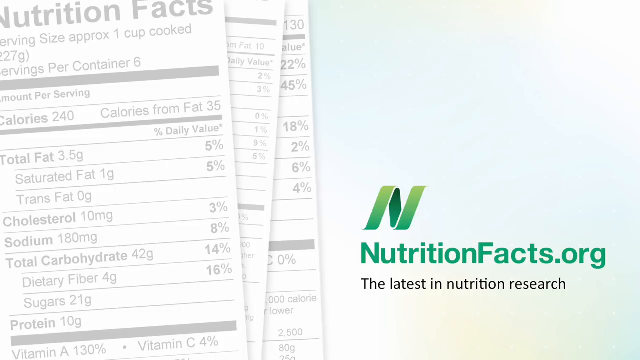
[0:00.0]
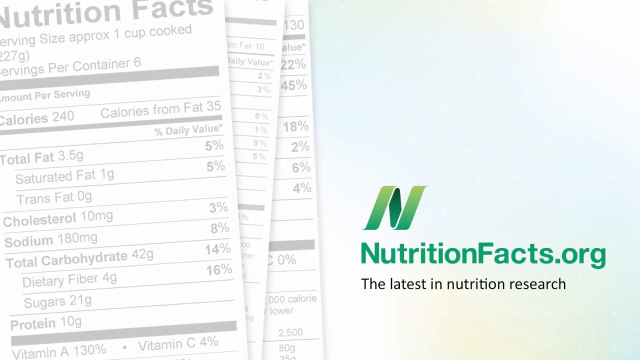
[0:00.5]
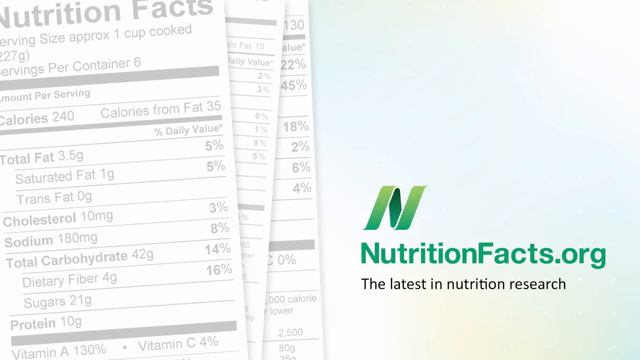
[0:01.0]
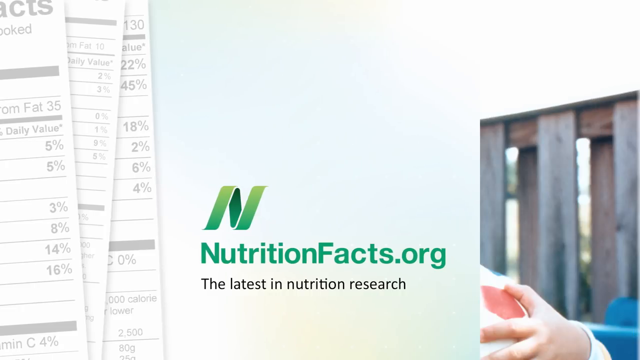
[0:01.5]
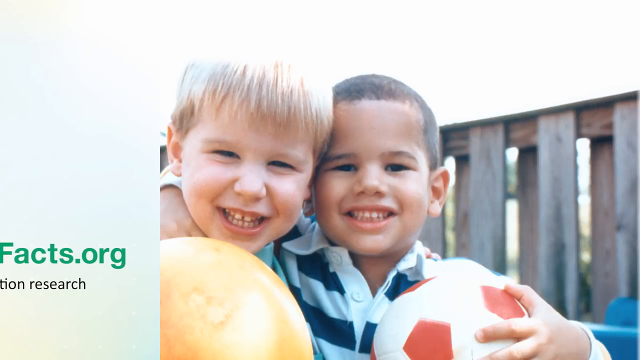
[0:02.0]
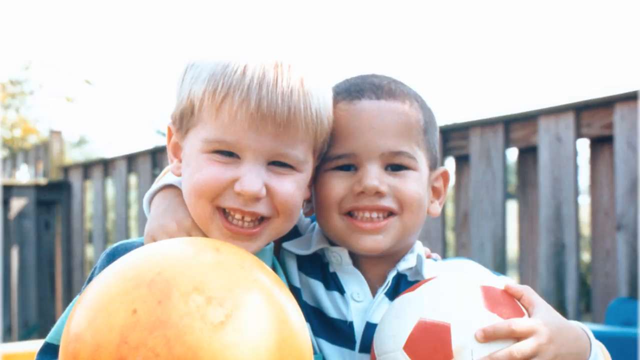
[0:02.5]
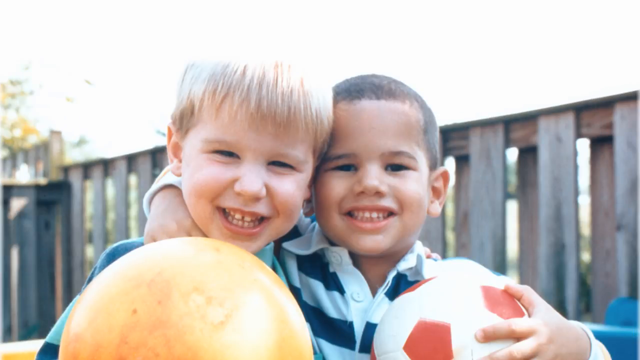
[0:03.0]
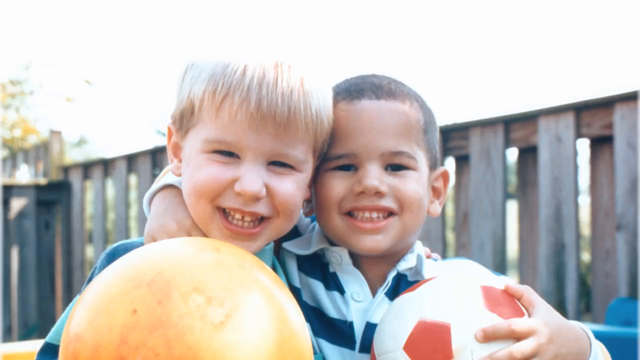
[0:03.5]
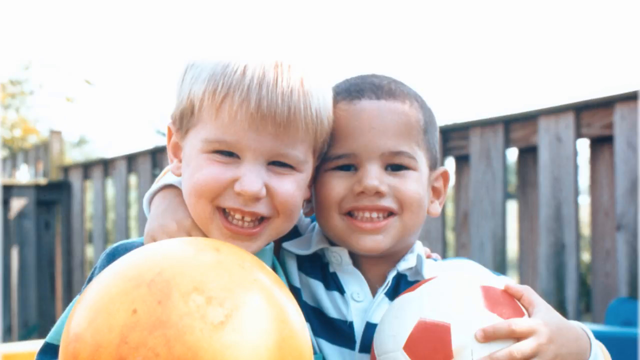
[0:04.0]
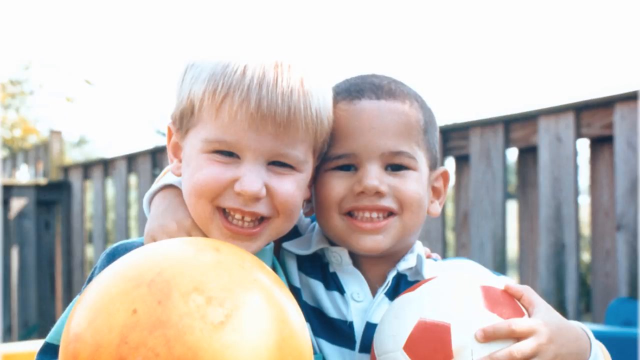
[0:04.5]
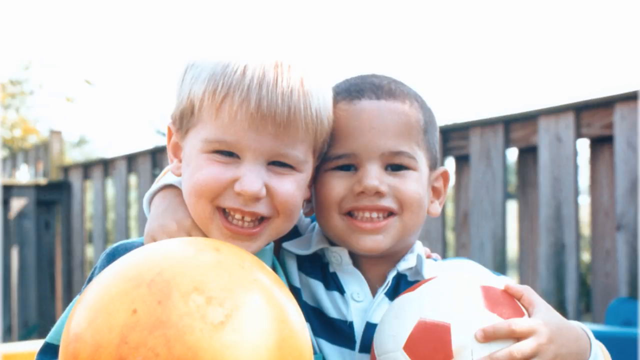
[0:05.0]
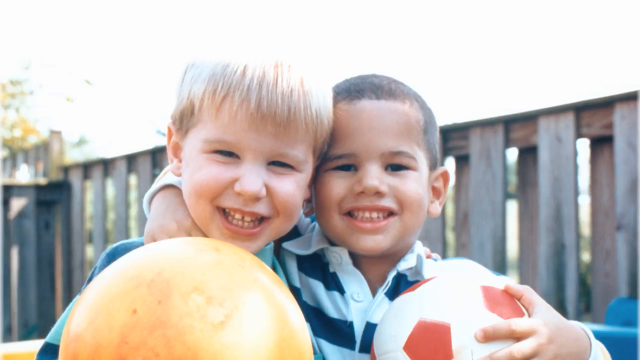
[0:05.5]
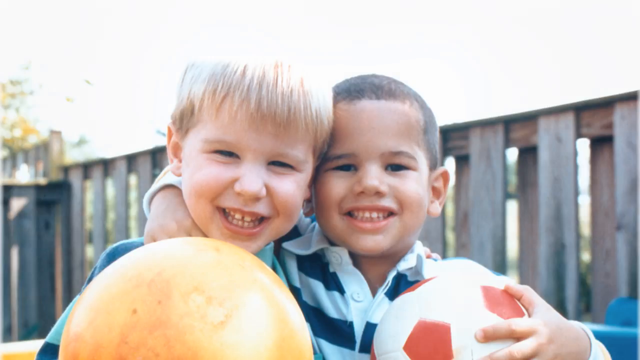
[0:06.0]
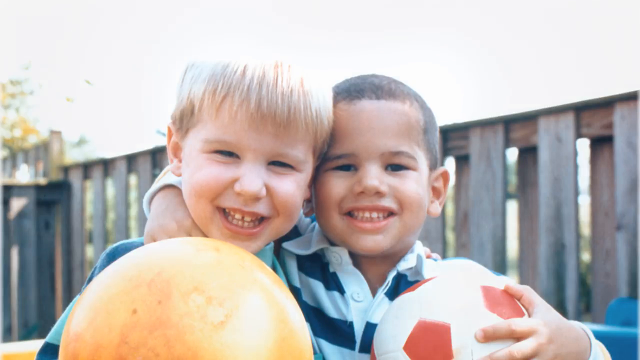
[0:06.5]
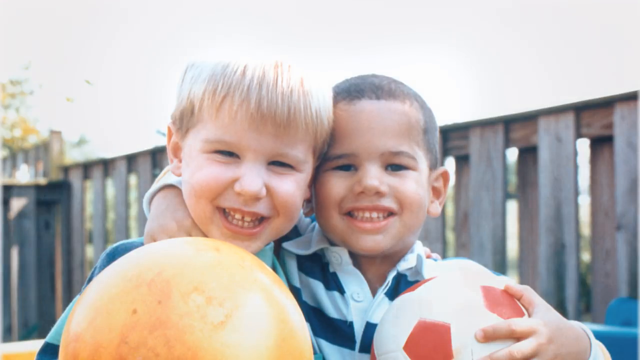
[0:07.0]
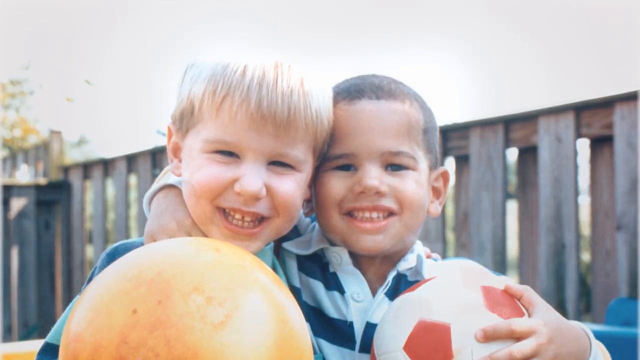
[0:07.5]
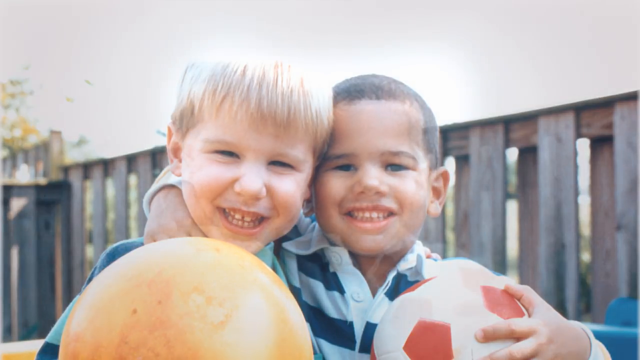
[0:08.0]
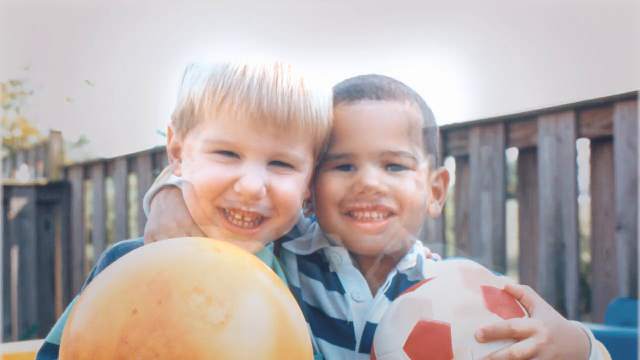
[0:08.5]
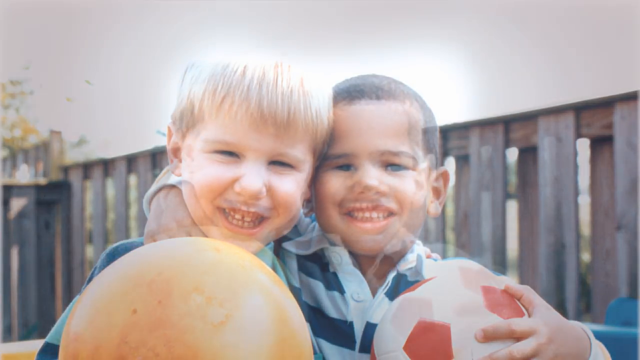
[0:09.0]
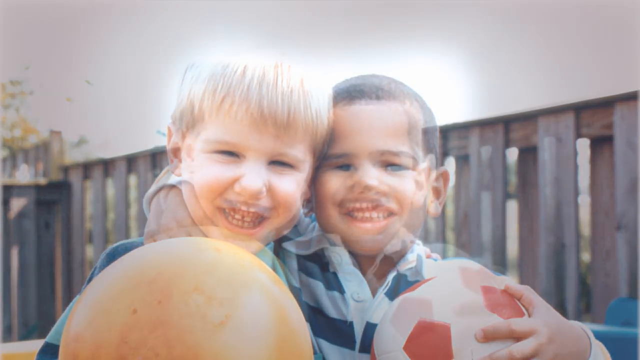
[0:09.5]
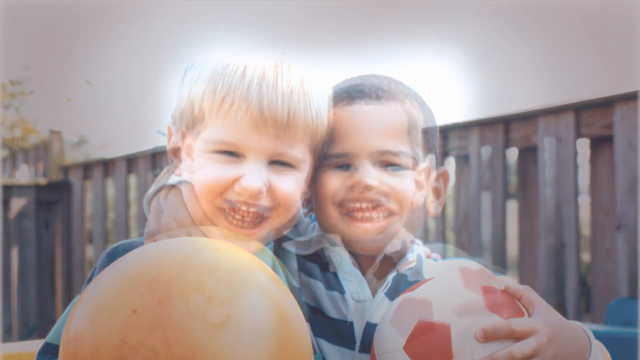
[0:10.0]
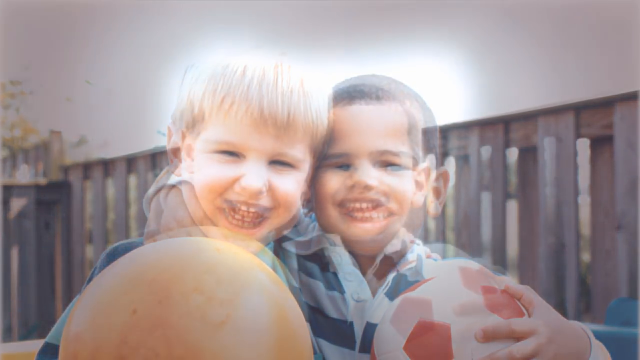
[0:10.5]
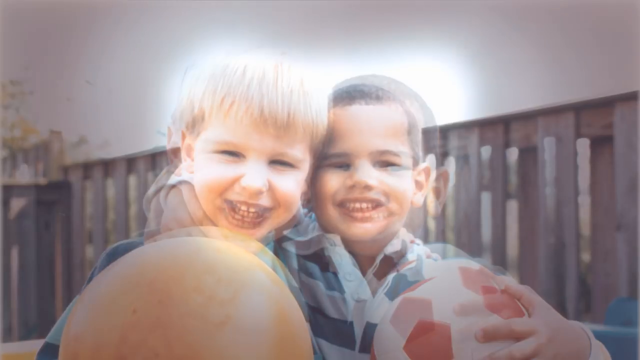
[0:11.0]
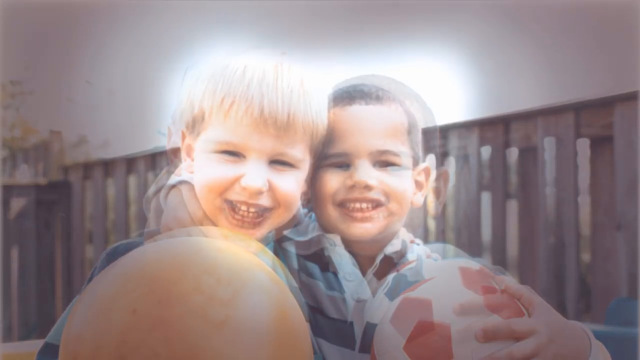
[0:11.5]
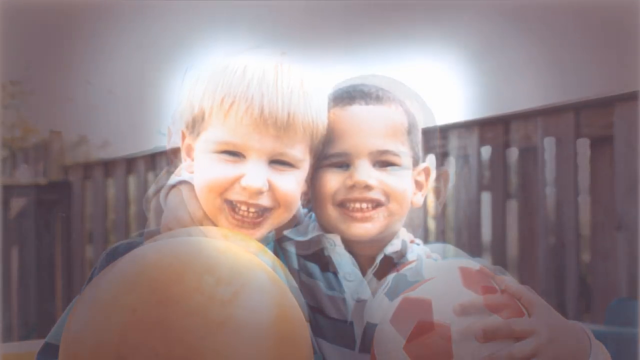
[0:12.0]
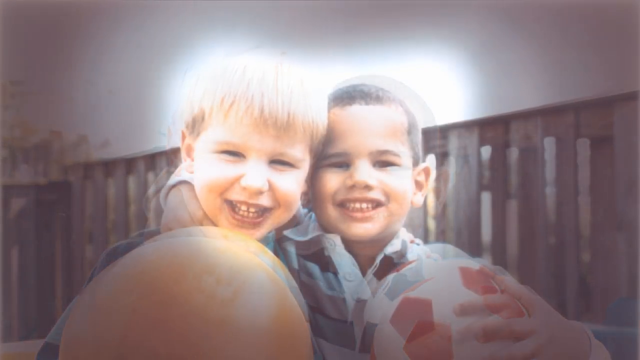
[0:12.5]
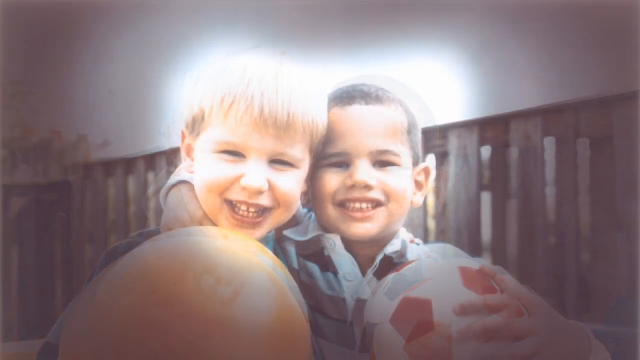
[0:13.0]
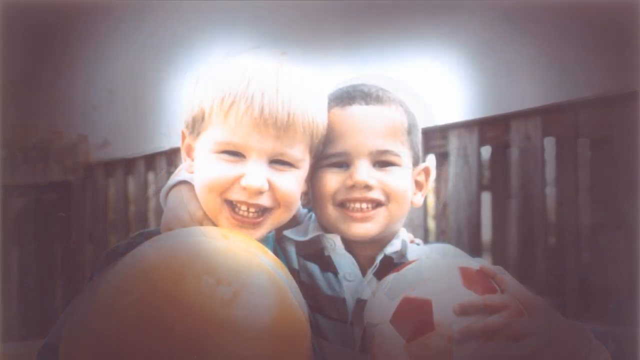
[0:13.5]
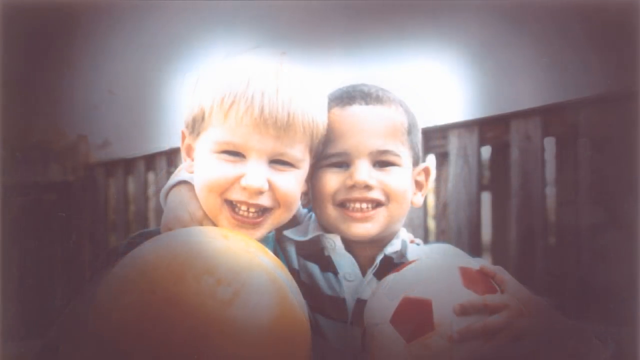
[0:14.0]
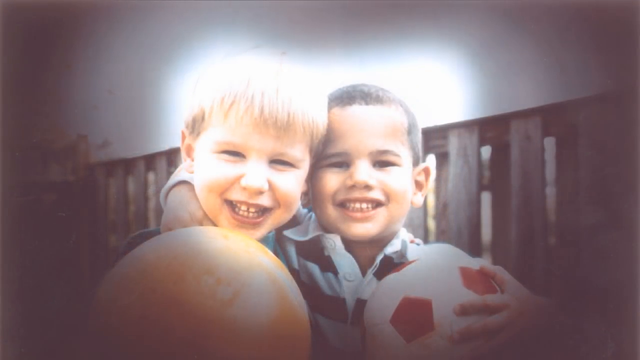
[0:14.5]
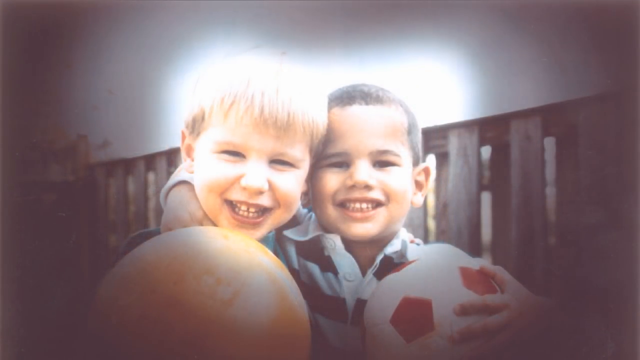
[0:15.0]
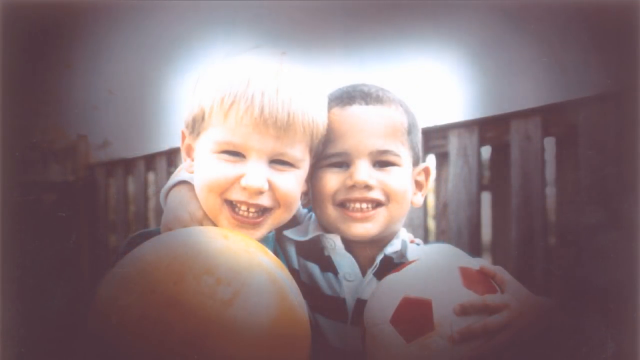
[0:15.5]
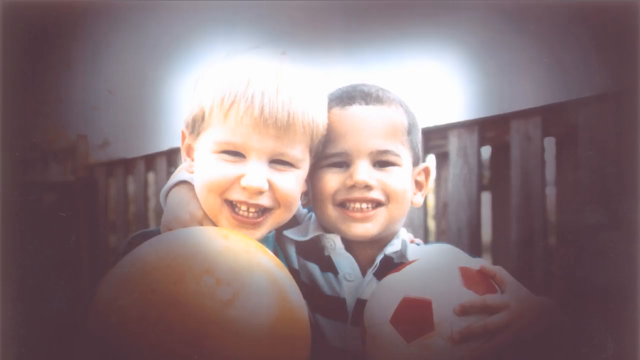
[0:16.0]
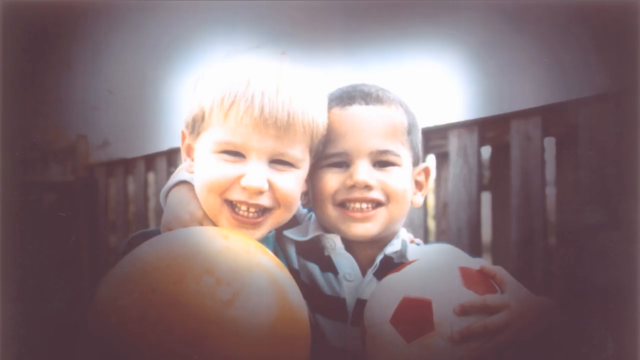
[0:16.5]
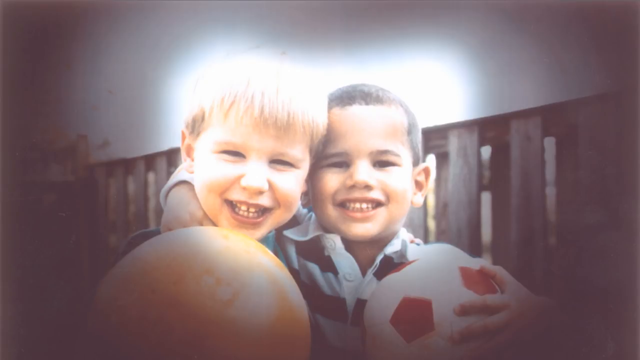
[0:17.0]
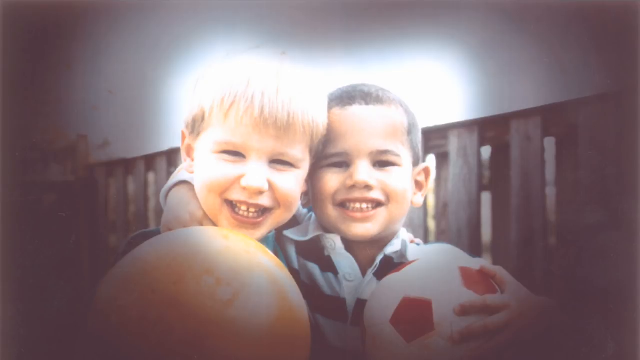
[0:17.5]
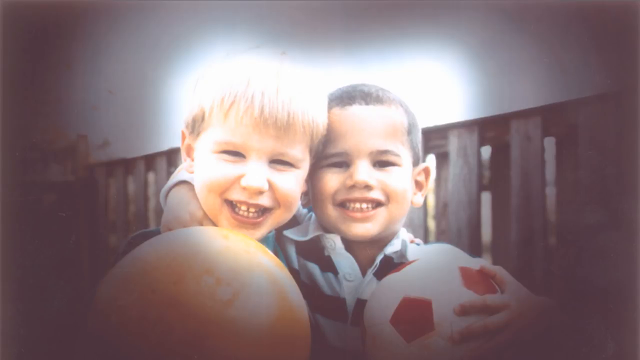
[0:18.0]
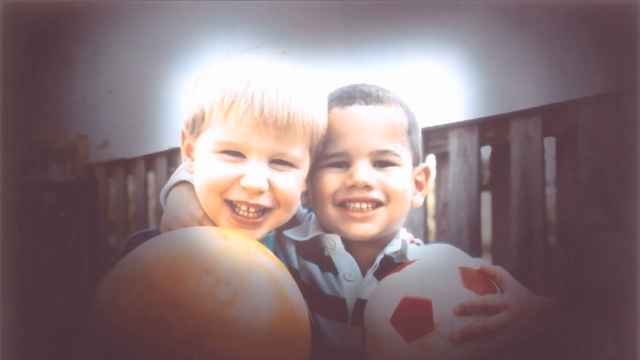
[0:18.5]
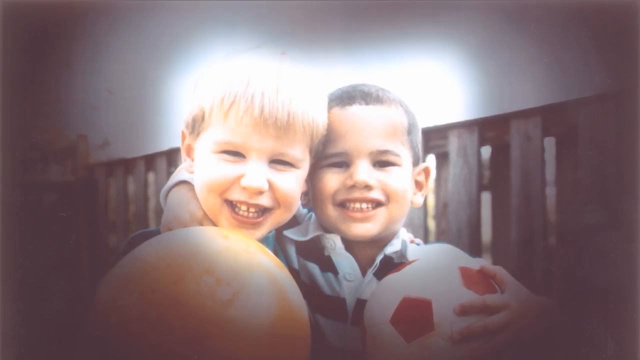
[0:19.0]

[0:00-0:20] The video begins with images of nutrition facts, the kind seen on packages of food items. It is from NutritionFacts.org, the latest in nutrition research, and three Nutrition Facts cards are shown. The video transitions to an outdoor photograph of two boys, no more than 3 years old, who appear to be standing on a wooden deck on a sunny day. They are smiling with their heads together; the boy on the right has his right arm around the shoulder of the boy on the left. Both hold bouncing balls in their hands. The image slowly transitions so that a small heart-like shape surrounds their heads while everything in the background becomes a bit shady. The video then returns to the first screen of the Nutrition Facts listings by NutritionFacts.org, the latest in nutrition research.